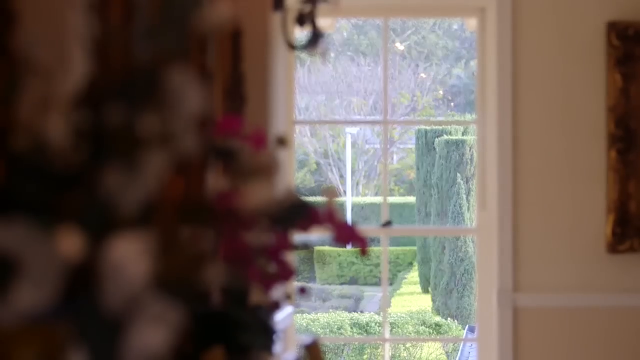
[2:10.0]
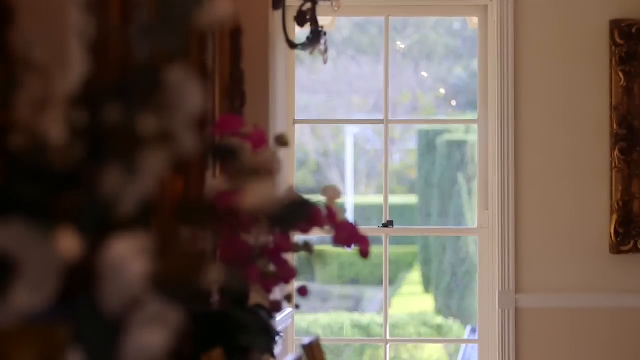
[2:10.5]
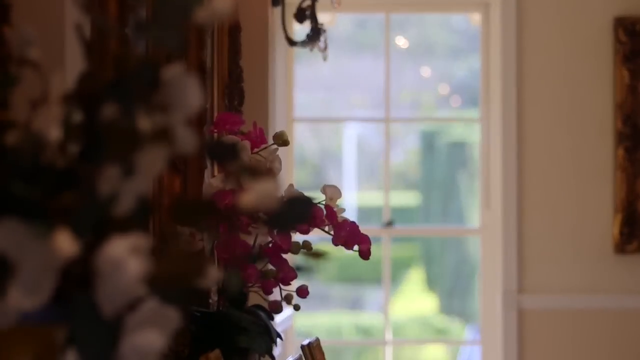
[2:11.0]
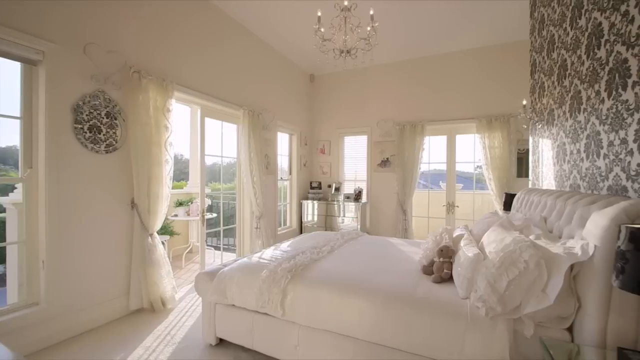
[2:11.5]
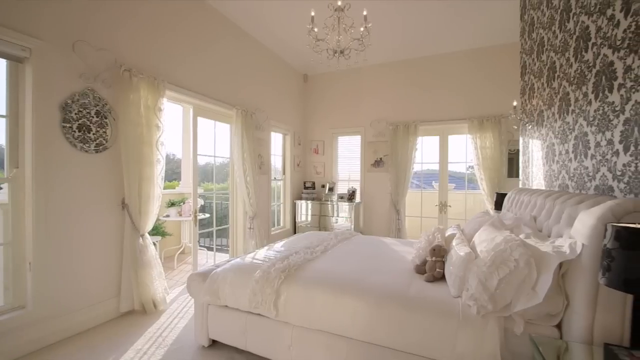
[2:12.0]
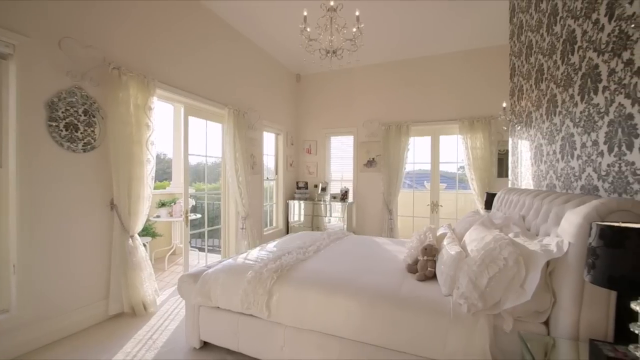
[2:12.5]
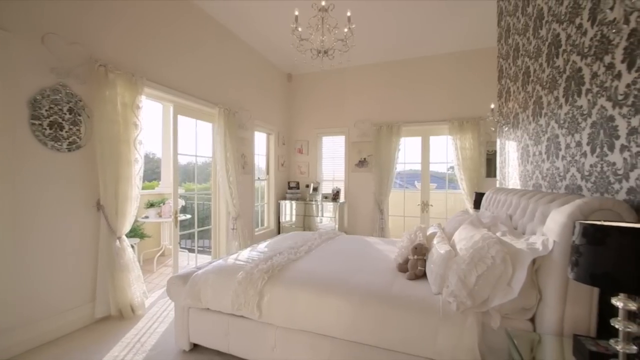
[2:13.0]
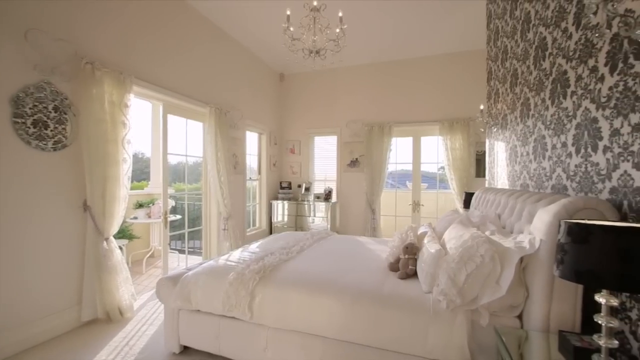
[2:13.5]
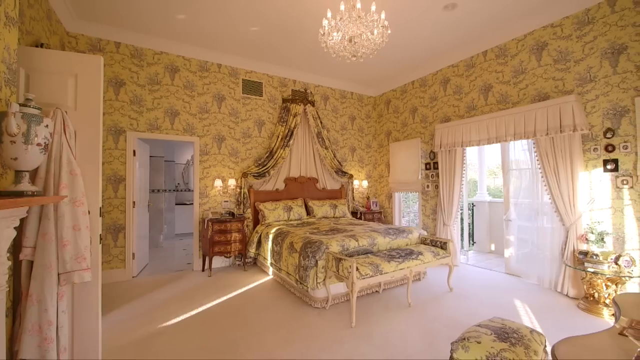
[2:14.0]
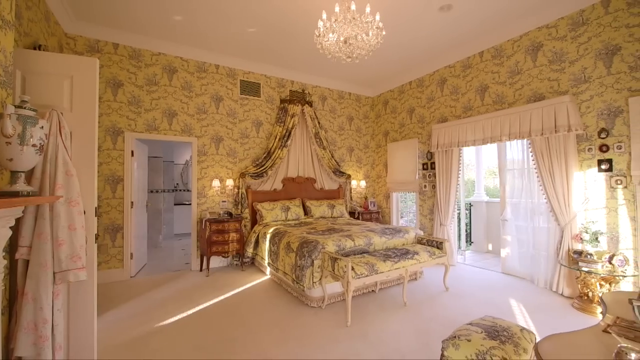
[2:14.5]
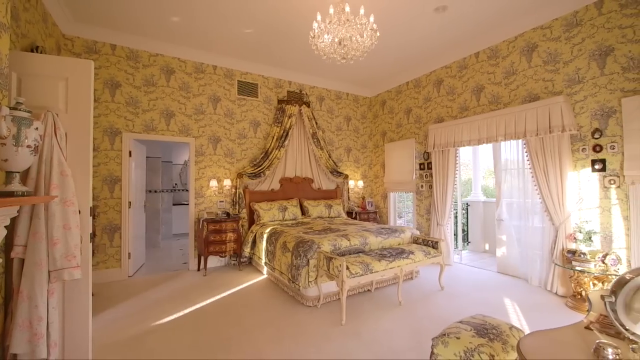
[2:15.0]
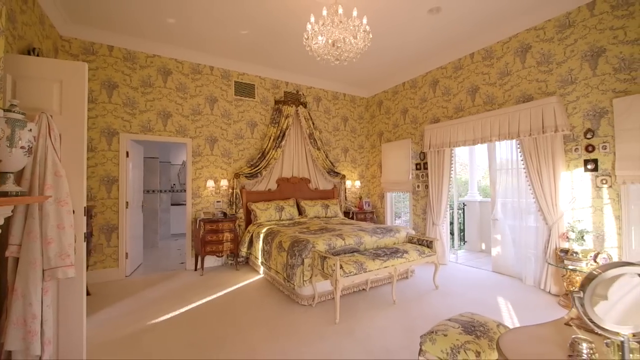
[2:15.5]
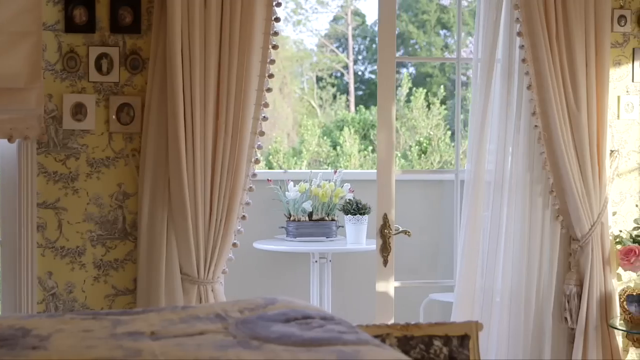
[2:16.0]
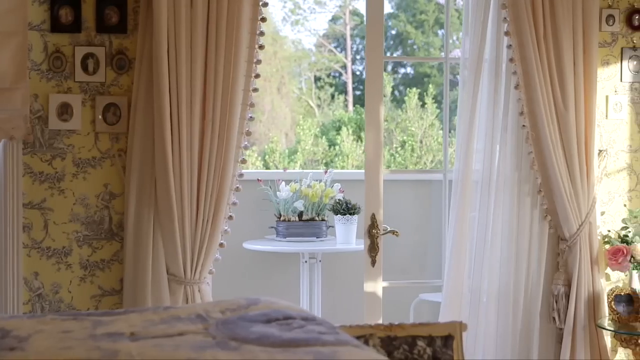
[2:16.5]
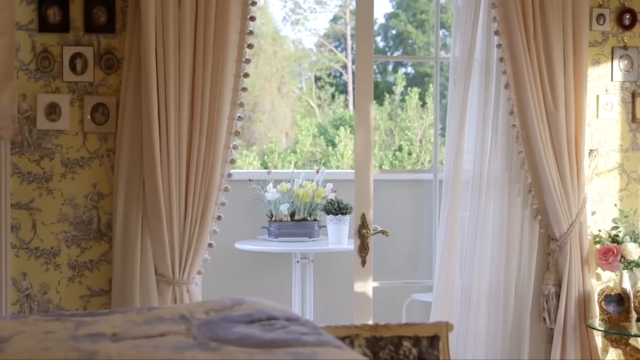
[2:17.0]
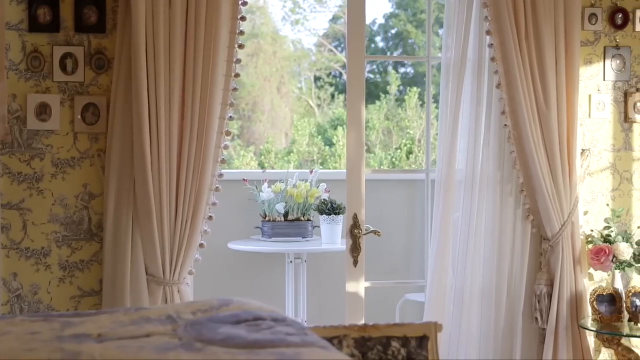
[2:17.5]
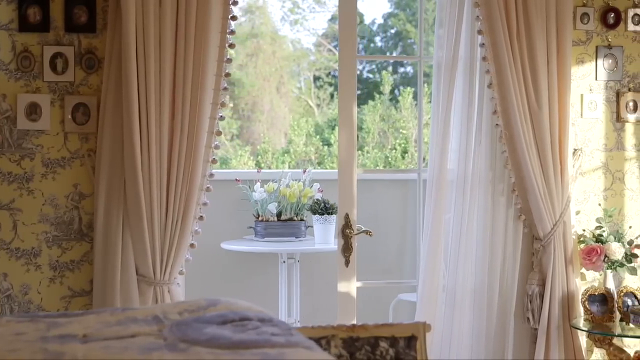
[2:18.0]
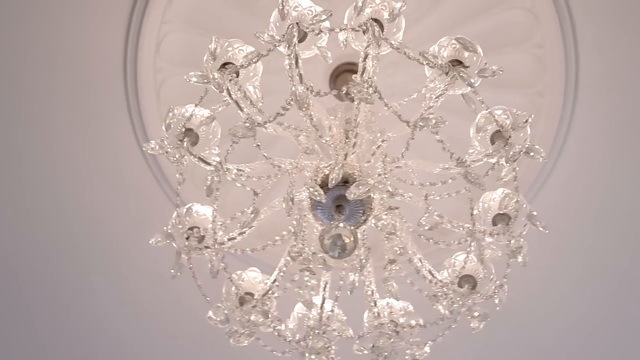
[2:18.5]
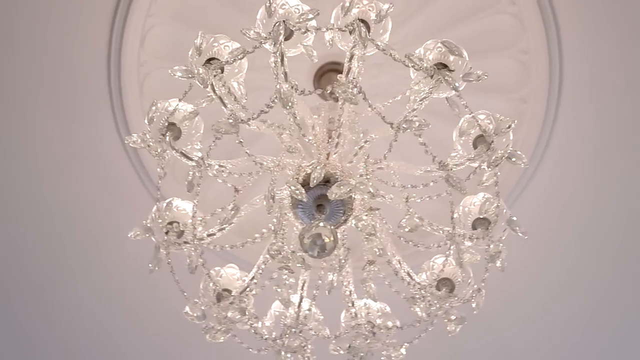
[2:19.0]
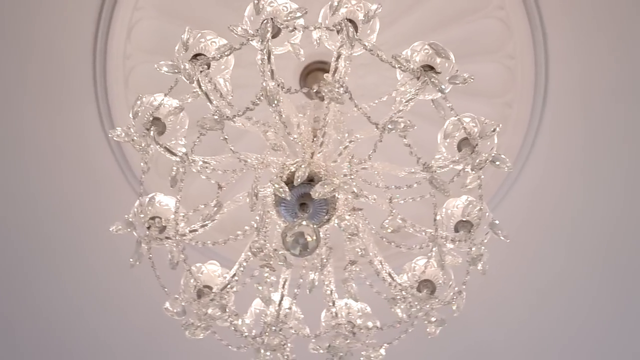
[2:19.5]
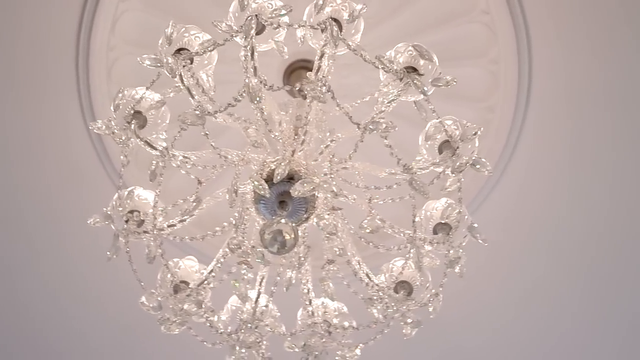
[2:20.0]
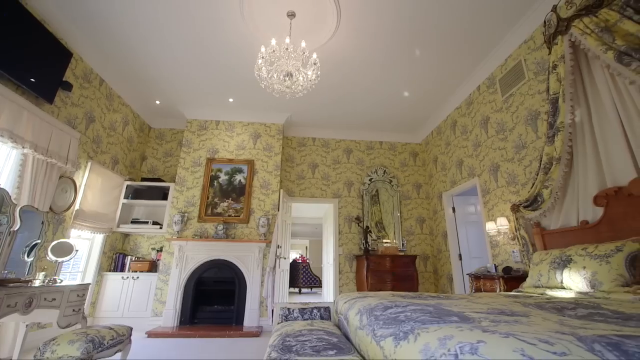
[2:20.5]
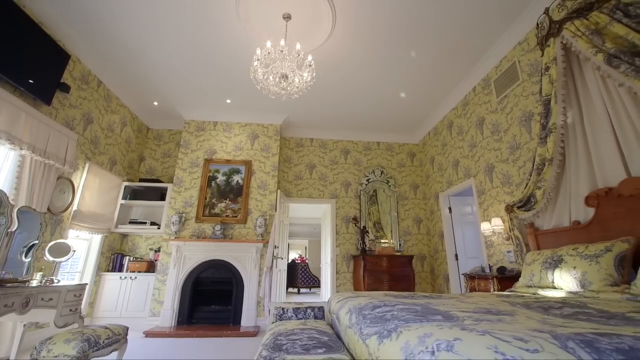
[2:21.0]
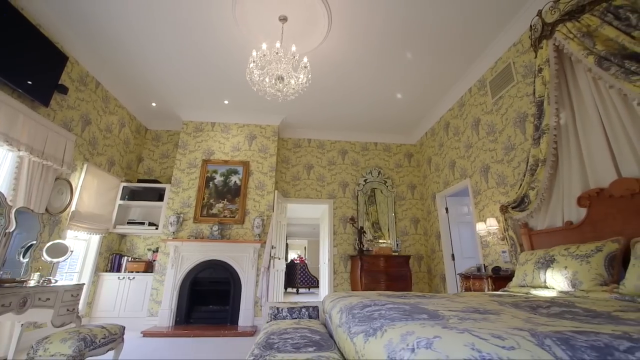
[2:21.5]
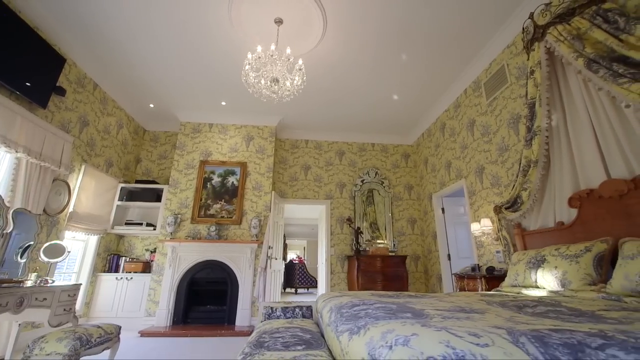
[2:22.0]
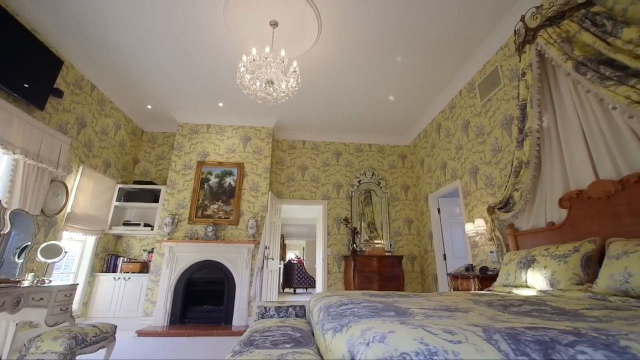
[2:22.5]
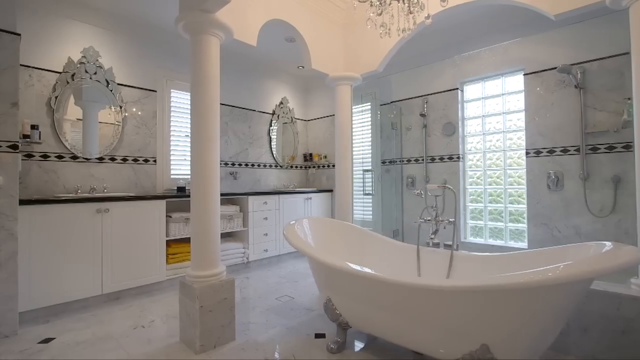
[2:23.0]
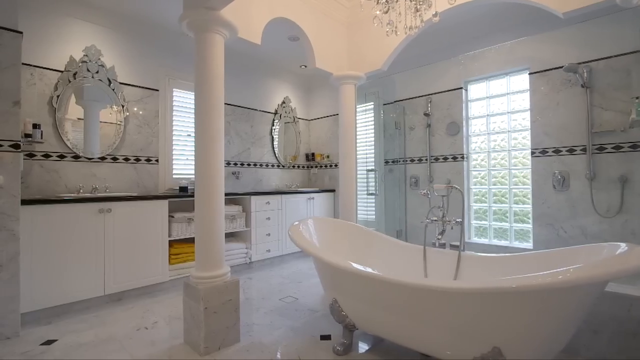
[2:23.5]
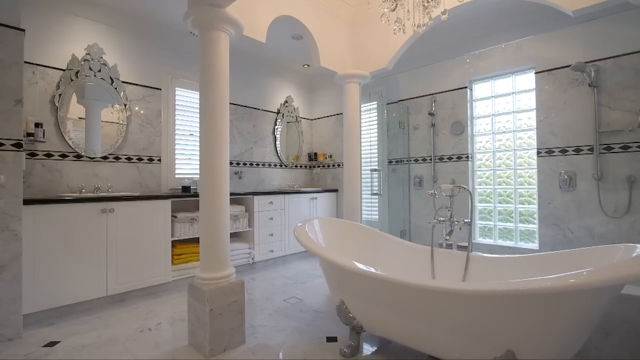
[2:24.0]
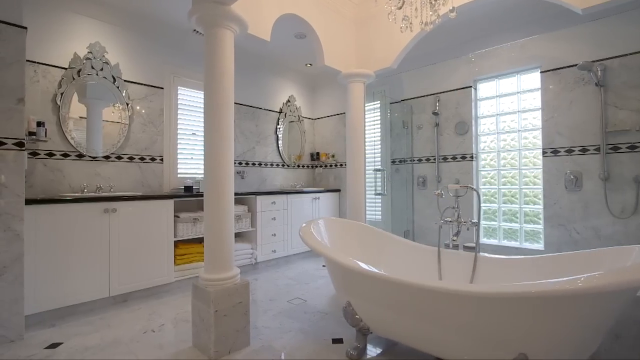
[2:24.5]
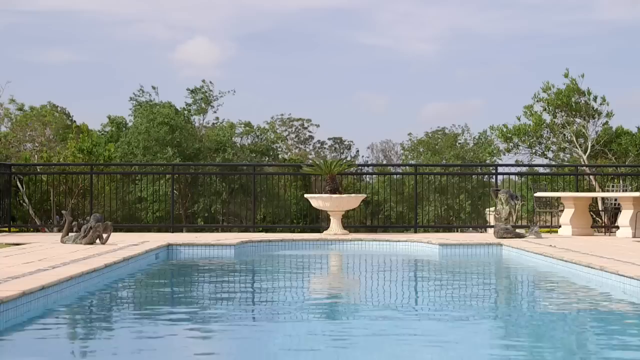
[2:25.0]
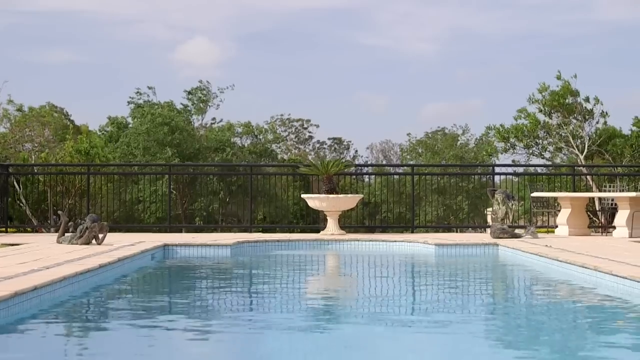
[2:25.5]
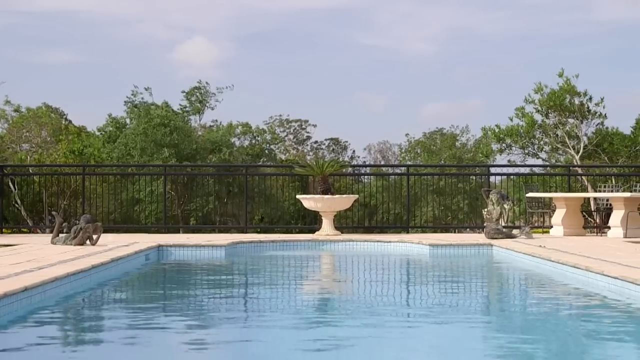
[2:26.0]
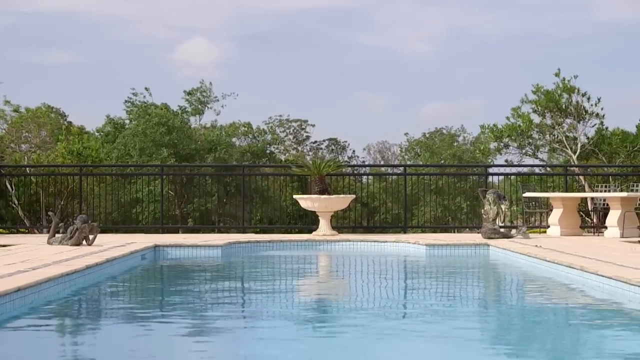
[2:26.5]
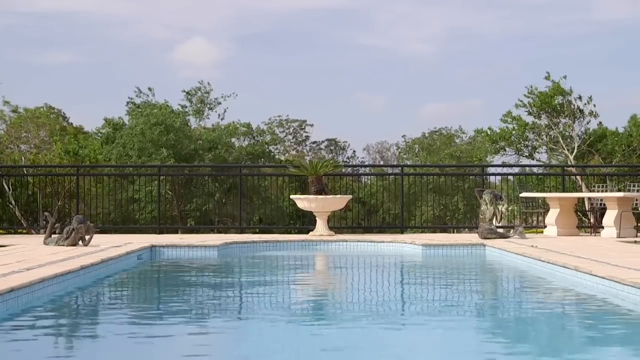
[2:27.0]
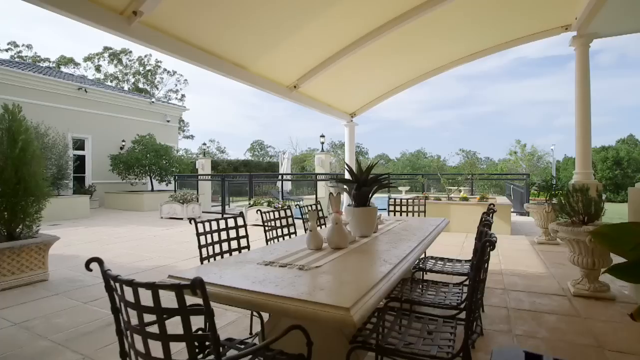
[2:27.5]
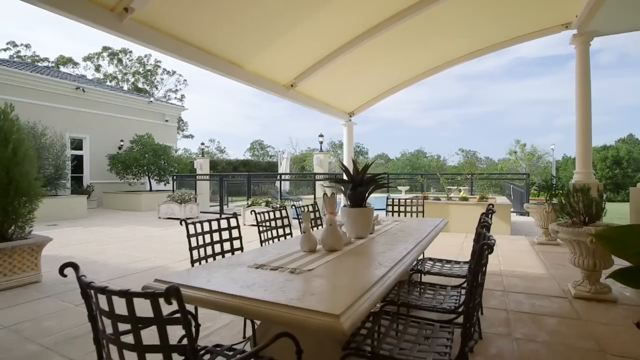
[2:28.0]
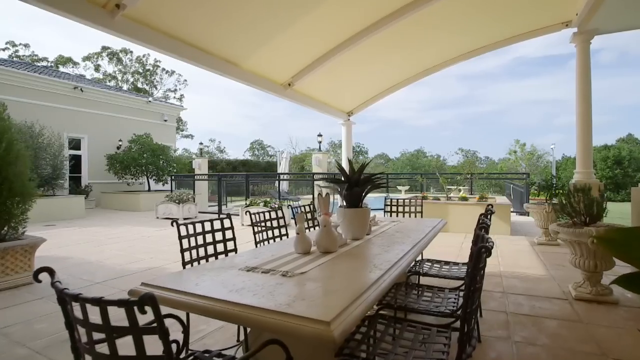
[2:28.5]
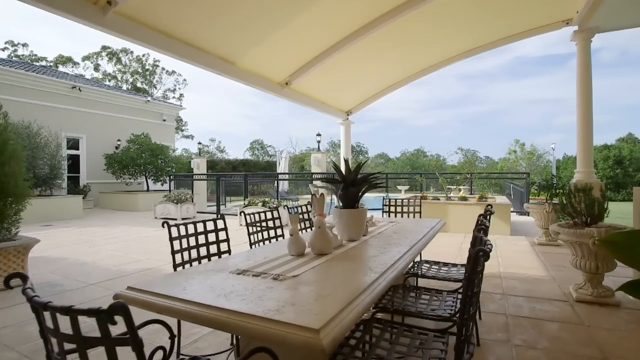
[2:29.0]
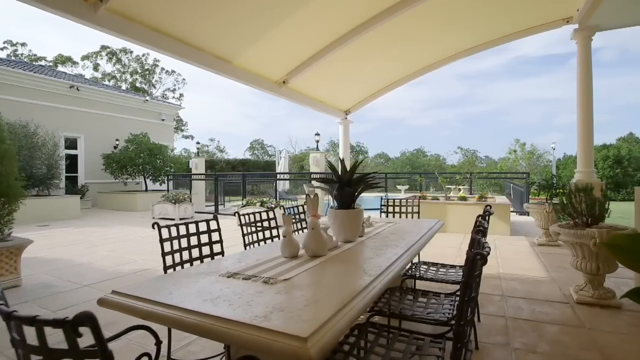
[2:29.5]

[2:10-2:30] The video switches to a white bedroom. The bed has white blankets or linens all over it and white pillows, there is a white sheet, the window curtains are white, and the head of the bed is white and cushioned. Another bedroom has more of a yellow theme: the walls look yellow, with decorations of what look like flowers or bush trees matching those on the bed blanket. The curtains are white, with natural light coming in from outside. The ceiling is white, and a lit chandelier hangs over the bed. A door leading to the inside of the house is wide open, and beams of natural light come from the left and reflect on the wall. The video then shows another bedroom, also with a white interior, and then a swimming pool outside.